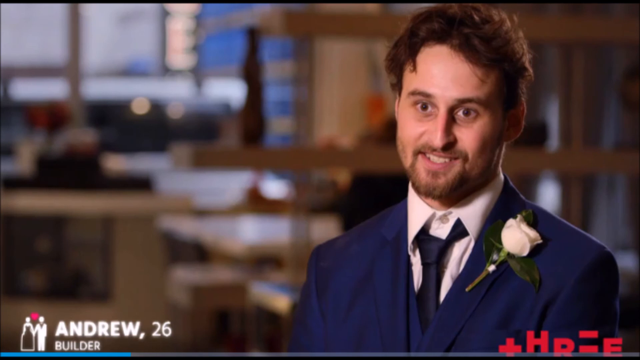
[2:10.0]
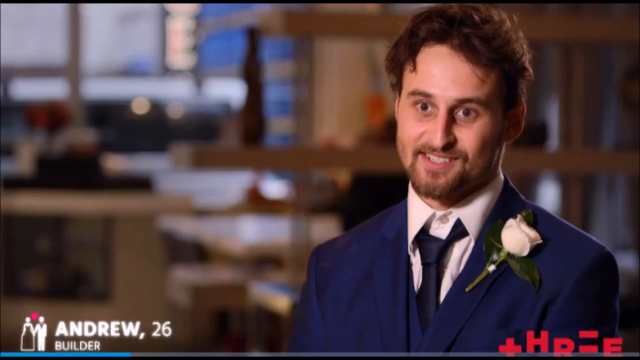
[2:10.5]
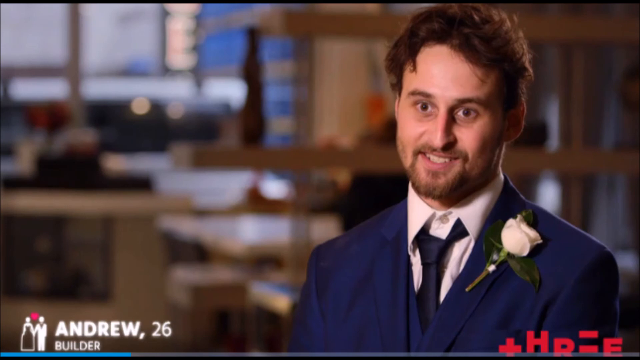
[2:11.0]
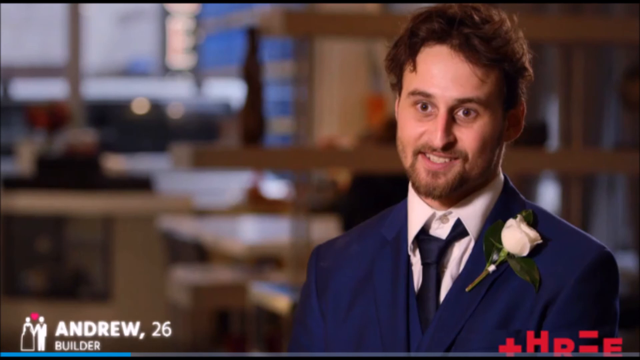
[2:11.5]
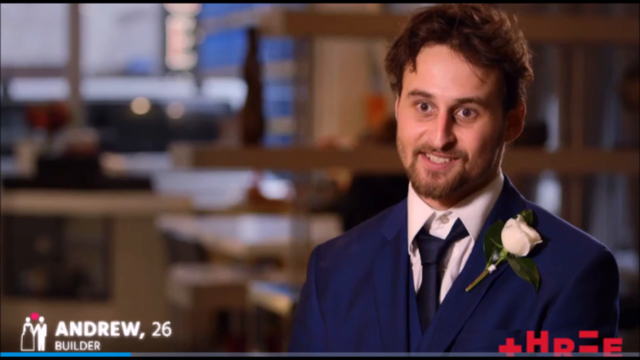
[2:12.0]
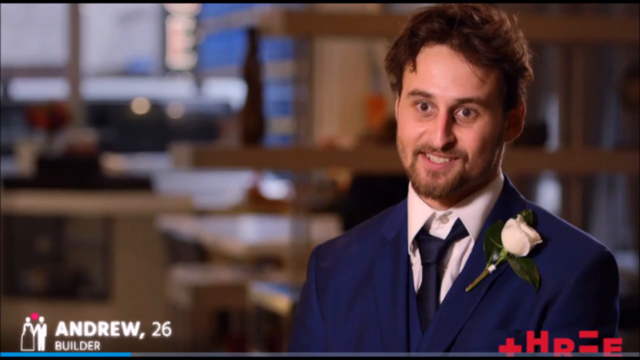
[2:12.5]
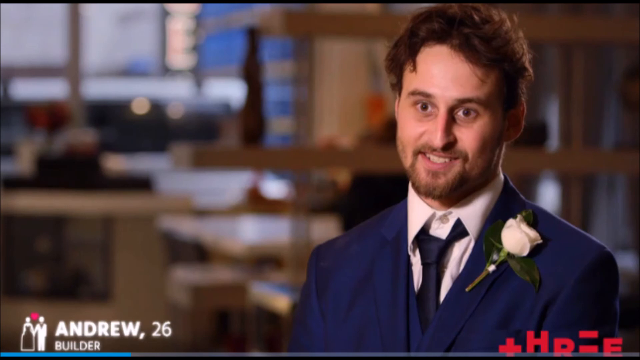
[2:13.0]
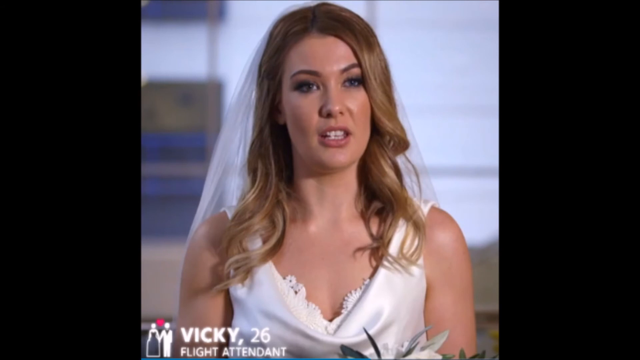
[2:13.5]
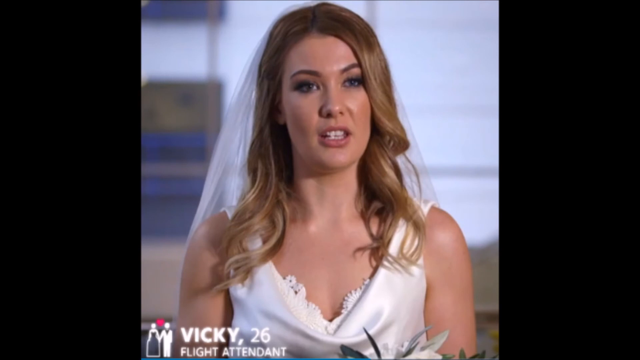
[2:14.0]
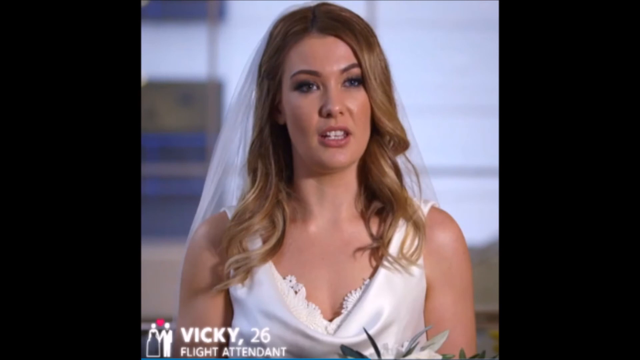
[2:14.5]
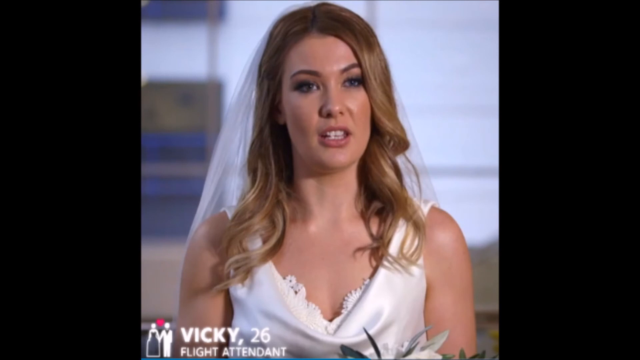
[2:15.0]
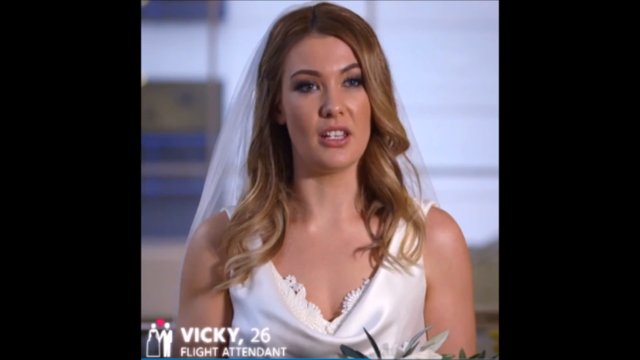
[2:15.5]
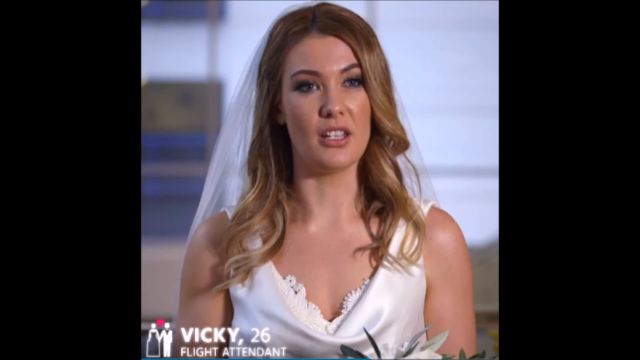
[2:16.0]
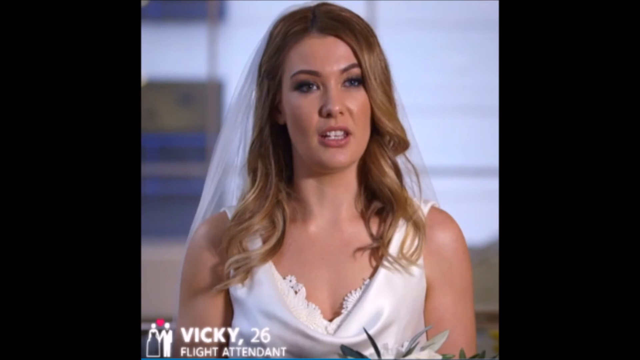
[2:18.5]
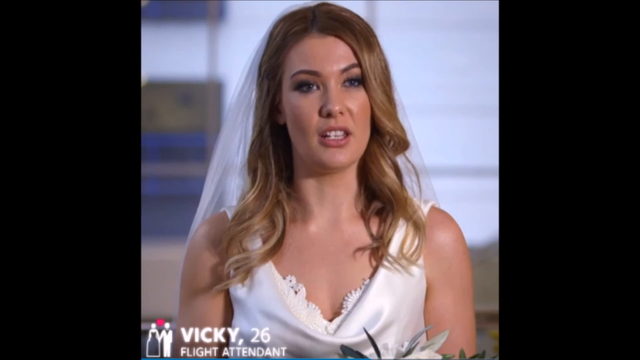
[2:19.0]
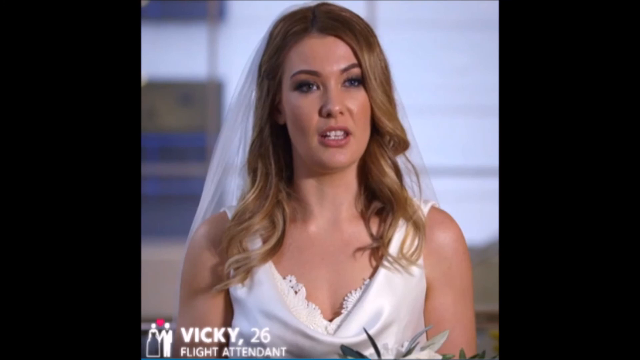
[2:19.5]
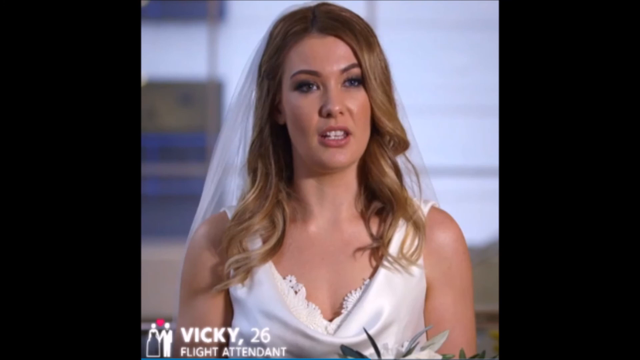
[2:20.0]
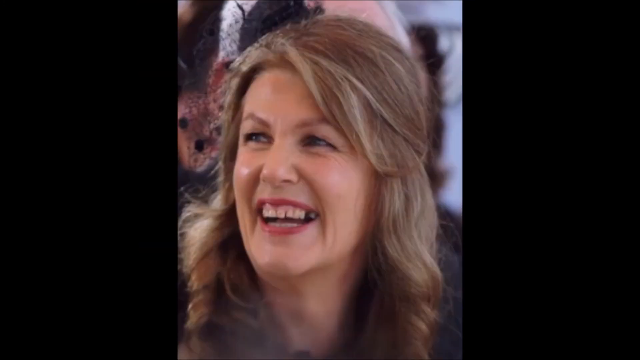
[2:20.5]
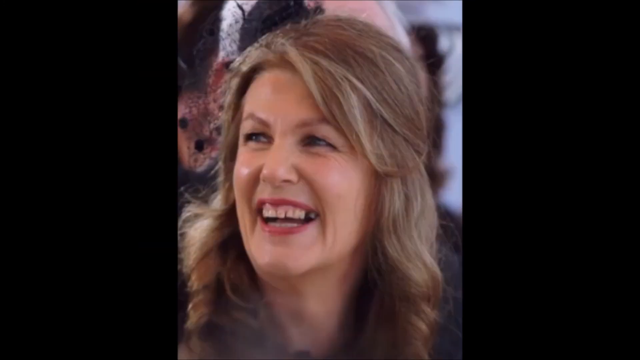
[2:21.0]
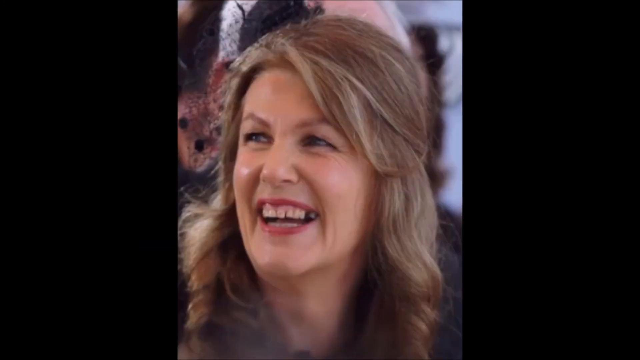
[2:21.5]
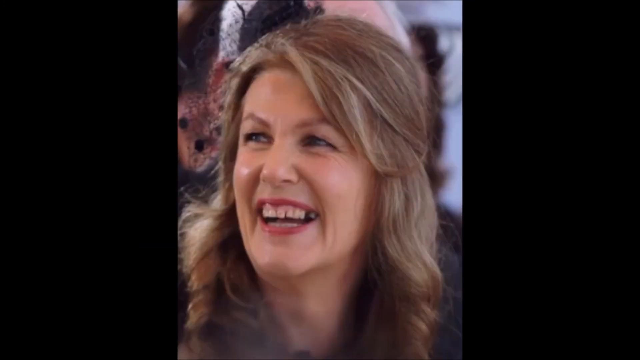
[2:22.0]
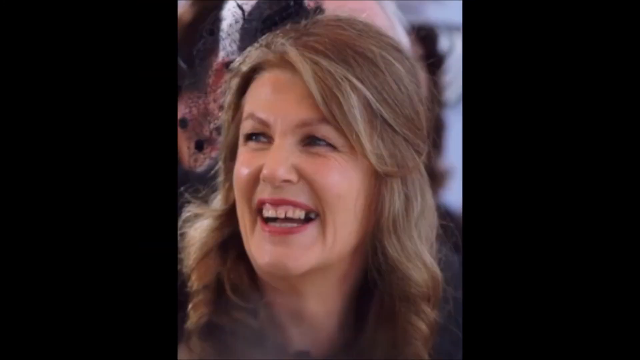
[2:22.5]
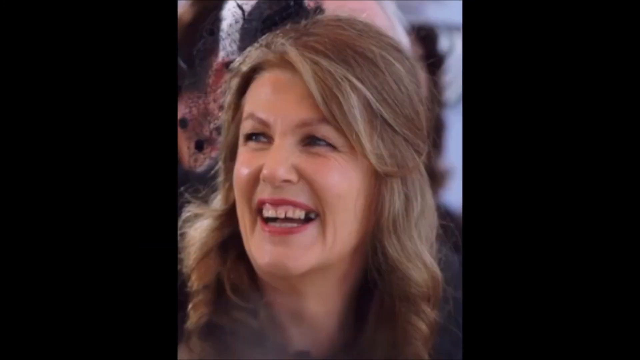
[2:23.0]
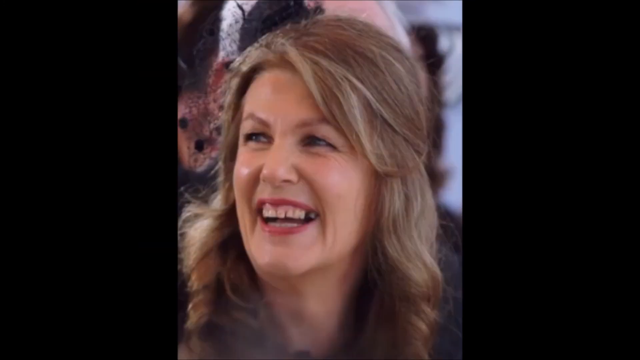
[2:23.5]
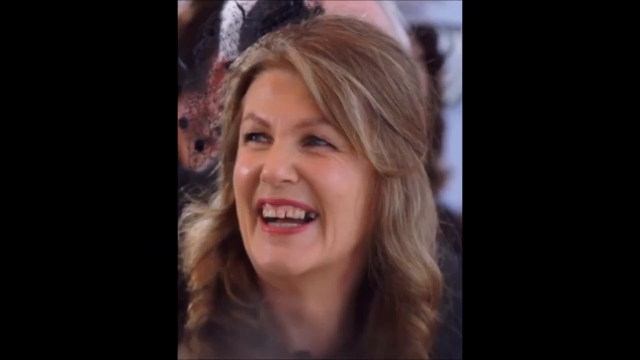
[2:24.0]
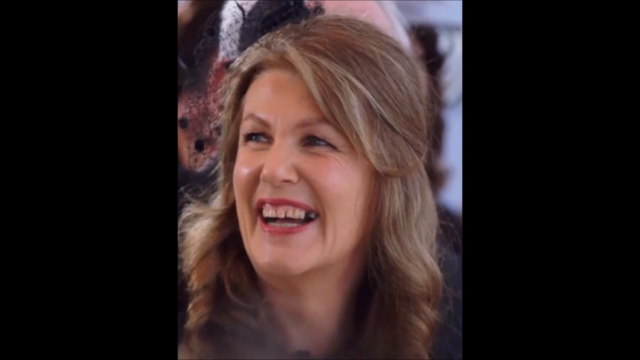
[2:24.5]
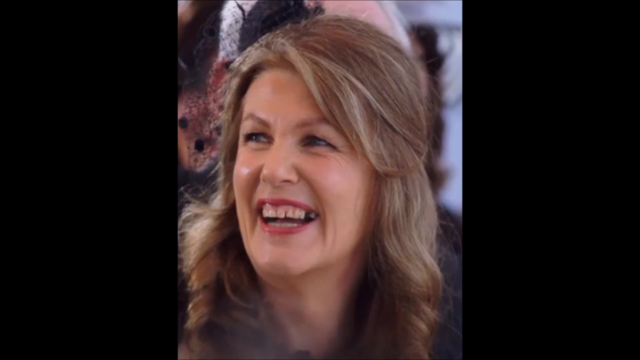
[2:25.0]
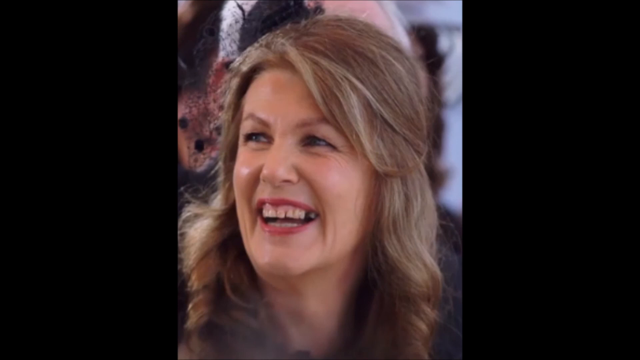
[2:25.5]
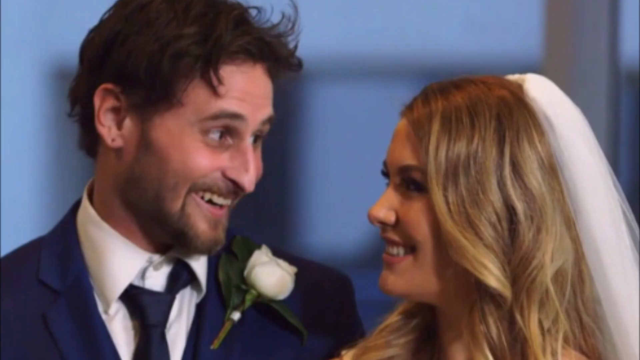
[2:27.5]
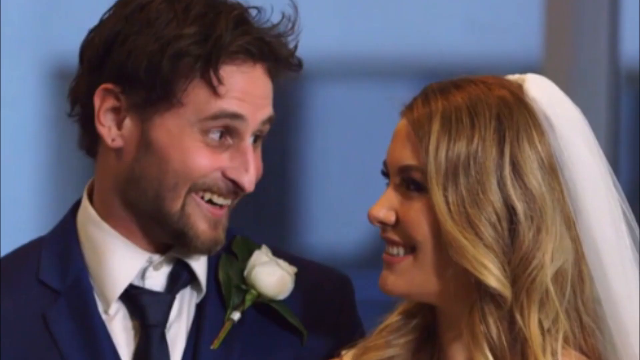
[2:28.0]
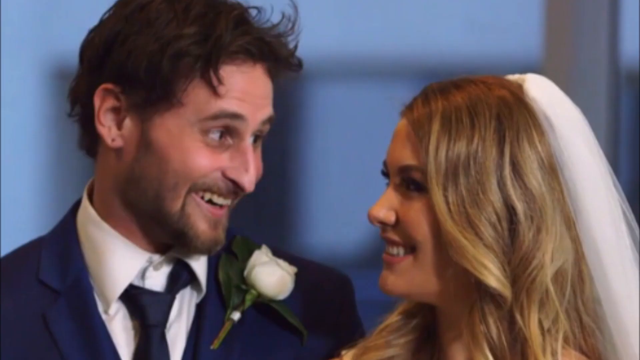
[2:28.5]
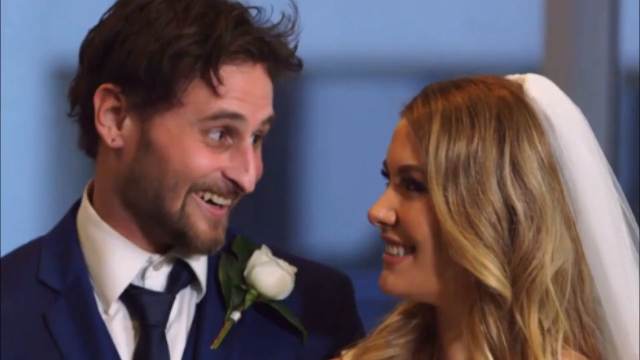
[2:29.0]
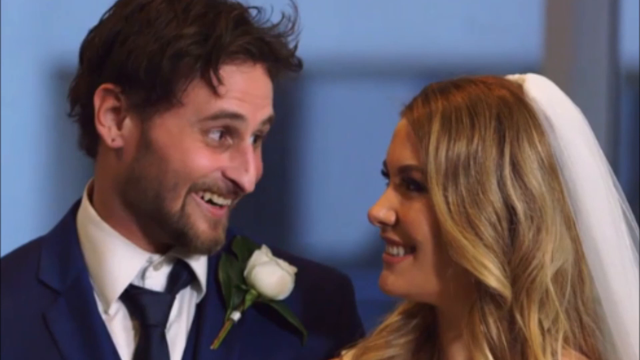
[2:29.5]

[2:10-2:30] A man in a blue suit with a flower pinned to it appears, identified as Andrew, 26. He has brown hair, a beard and a mustache. Another screen shows Wiki, 26, who wears a white wedding dress. Next comes a picture of a couple, Andrew on the left and Wiki on the right, smiling at each other. The woman has blonde hair and the man has brown hair. Behind them is a window with blue light coming through it from outside.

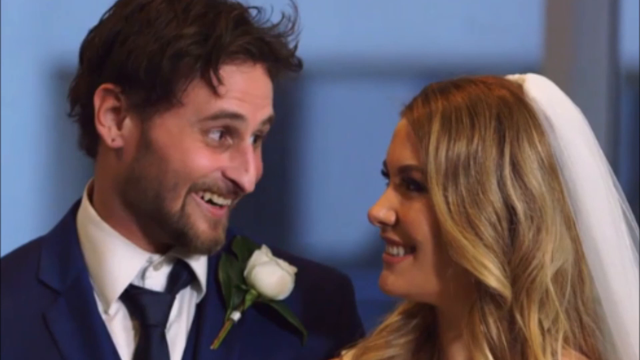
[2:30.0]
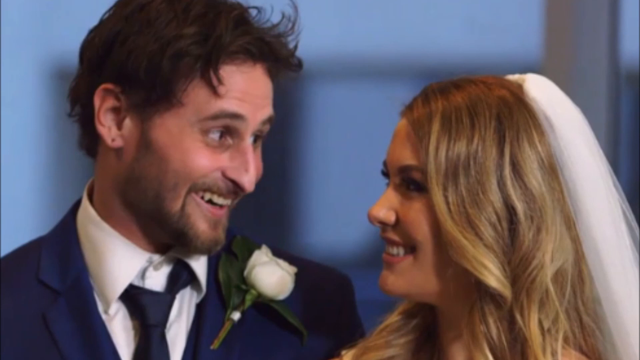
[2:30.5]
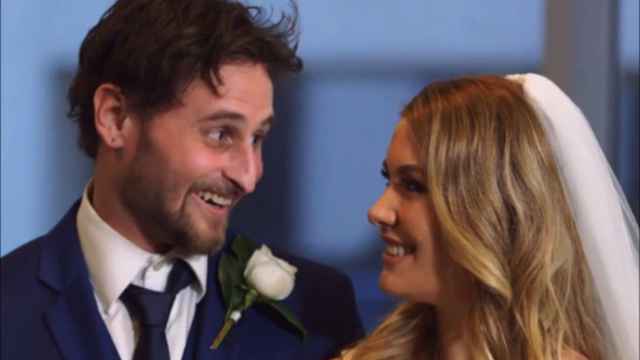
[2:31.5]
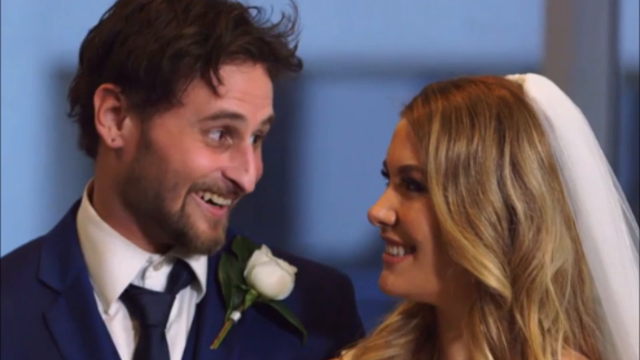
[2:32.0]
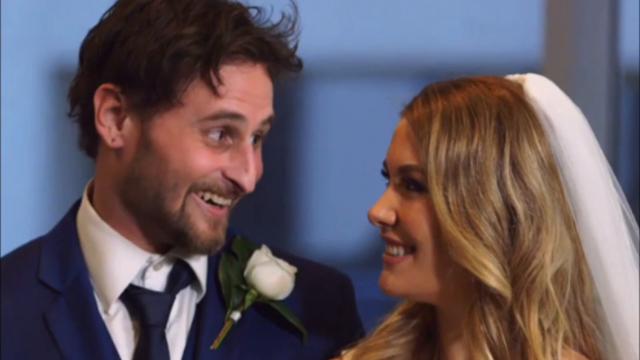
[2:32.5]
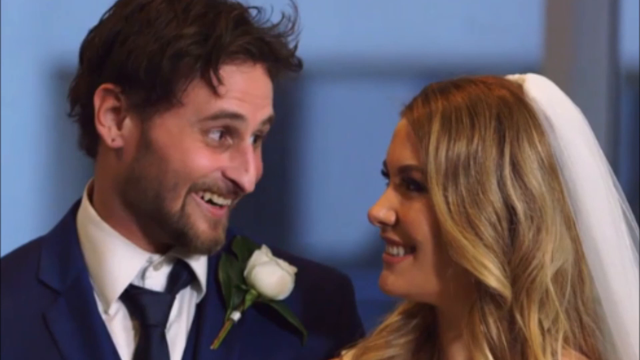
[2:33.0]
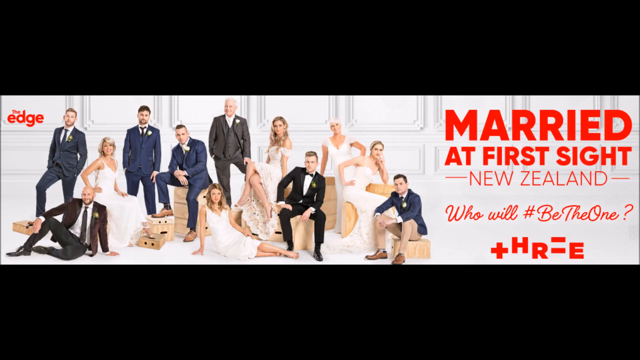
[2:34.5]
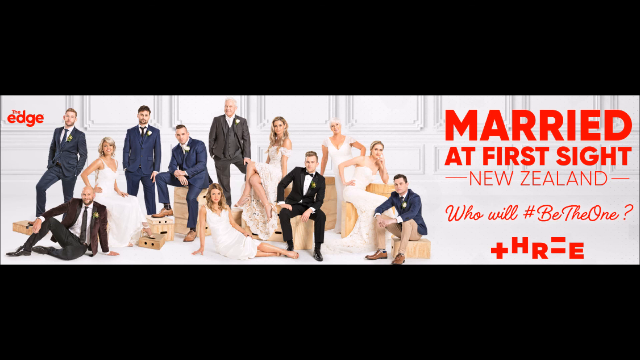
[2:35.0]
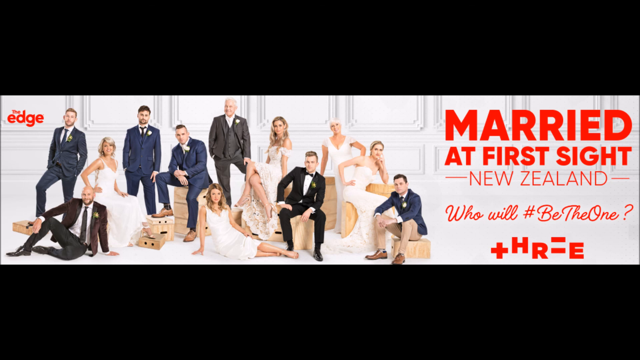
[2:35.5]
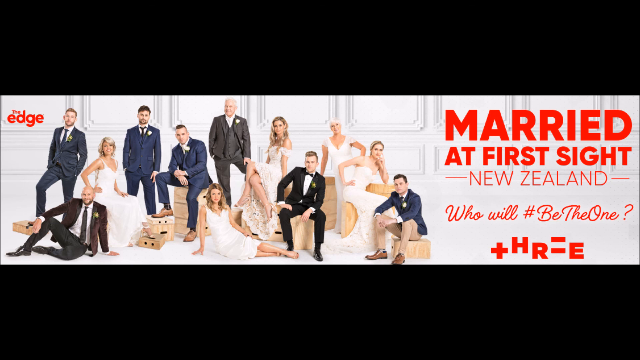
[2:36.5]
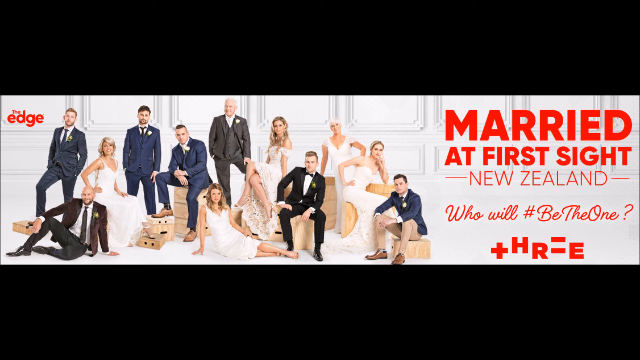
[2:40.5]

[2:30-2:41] A husband on the left and a bride on the right appear. The bride has blonde hair with something blue in it. The man on the left wears a blue suit with a flower pinned to it; he has shaved his beard and mustache and has his hair done. A glimpse of Married at First Sight New Zealand, who will be the one, follows. A picture then shows many women in white dresses and many men in suits, including blue, black and brown suits, and the video comes to an end.